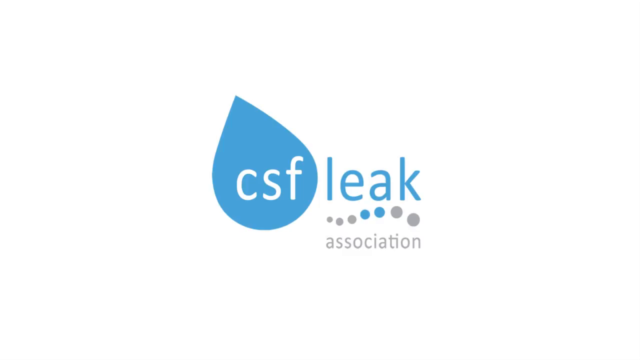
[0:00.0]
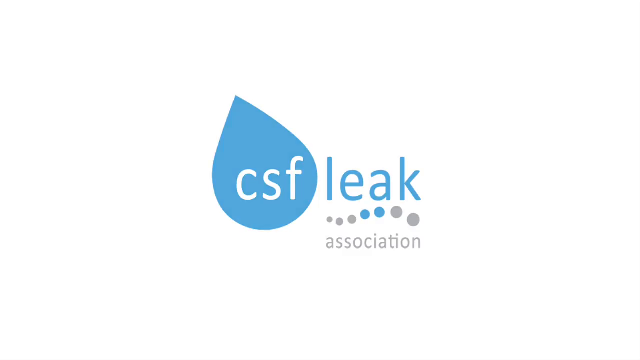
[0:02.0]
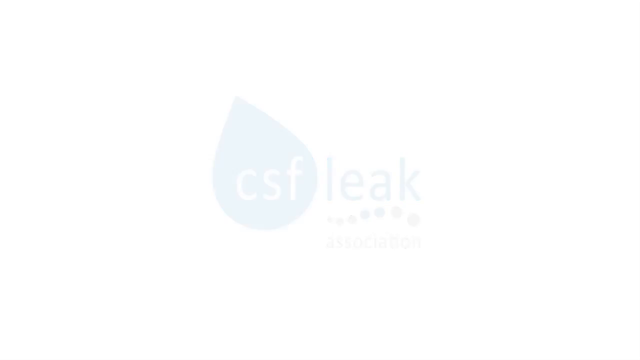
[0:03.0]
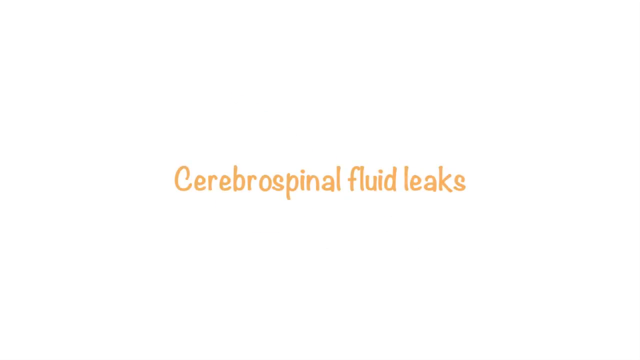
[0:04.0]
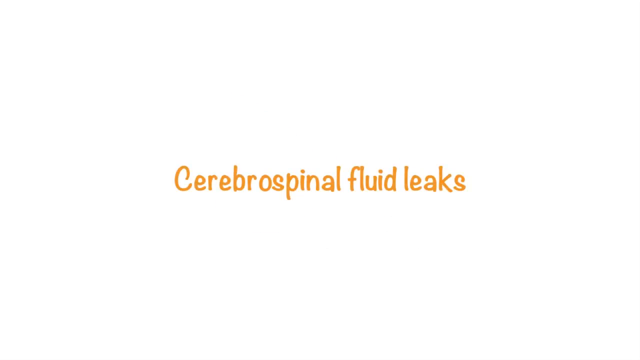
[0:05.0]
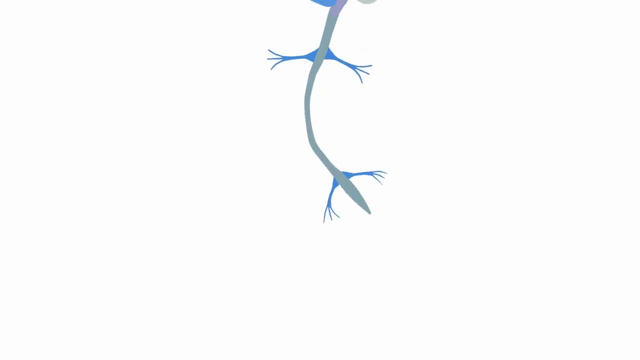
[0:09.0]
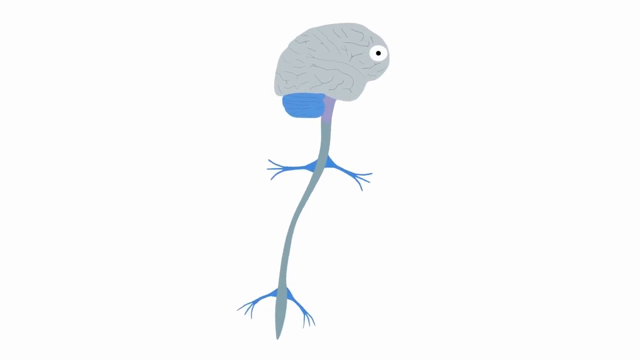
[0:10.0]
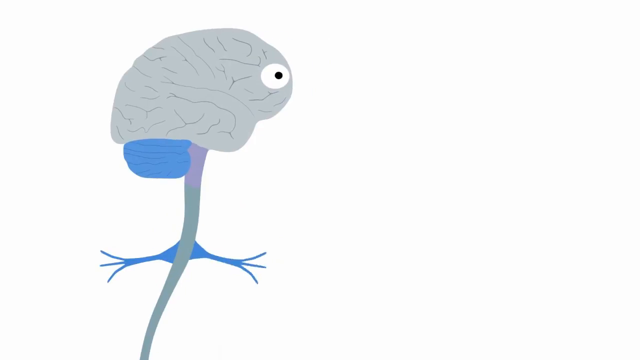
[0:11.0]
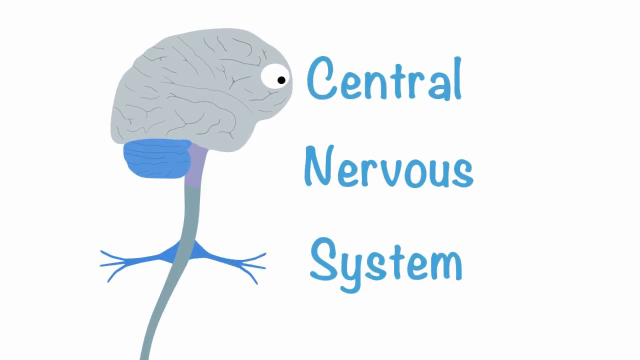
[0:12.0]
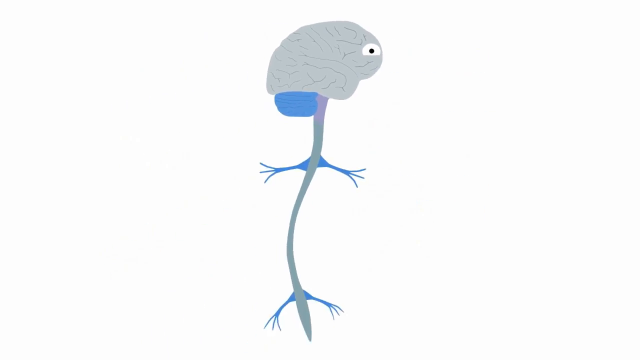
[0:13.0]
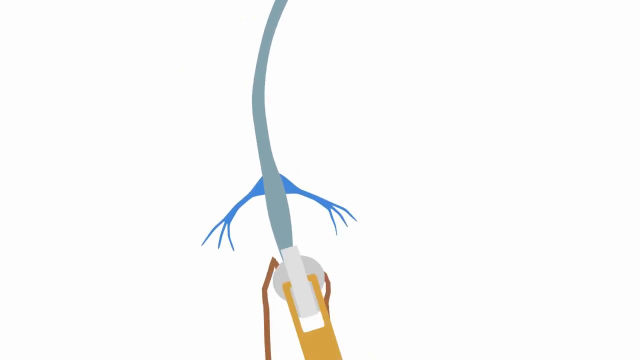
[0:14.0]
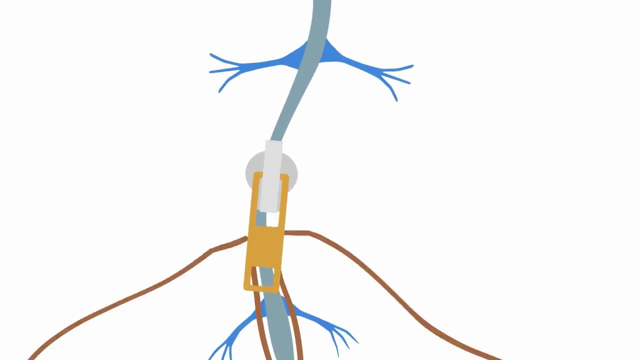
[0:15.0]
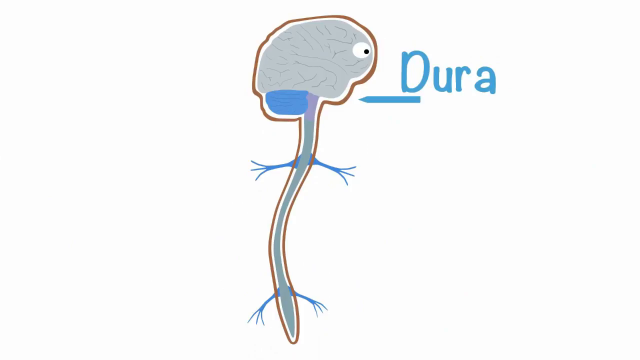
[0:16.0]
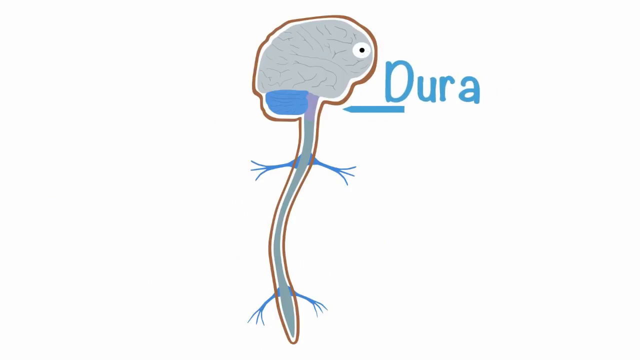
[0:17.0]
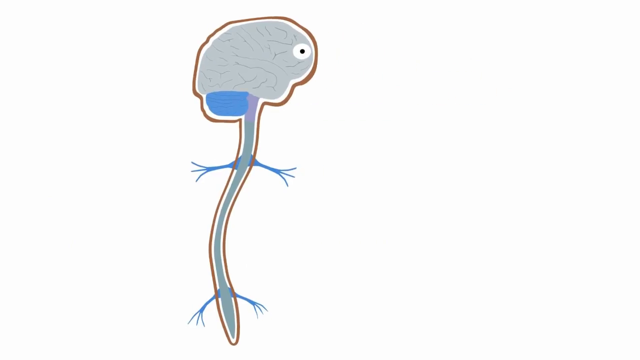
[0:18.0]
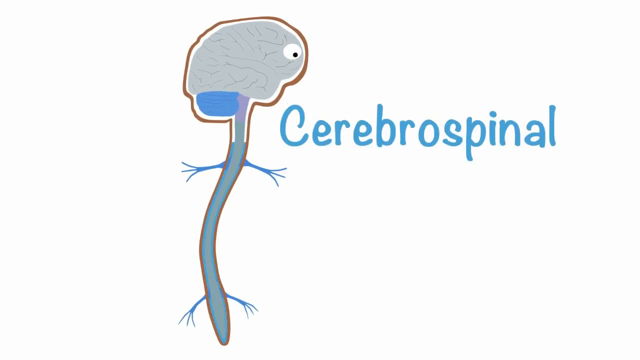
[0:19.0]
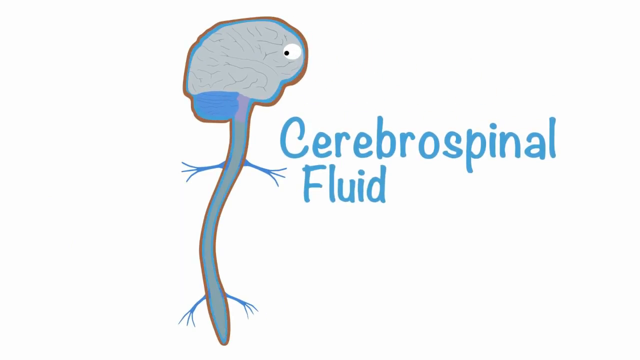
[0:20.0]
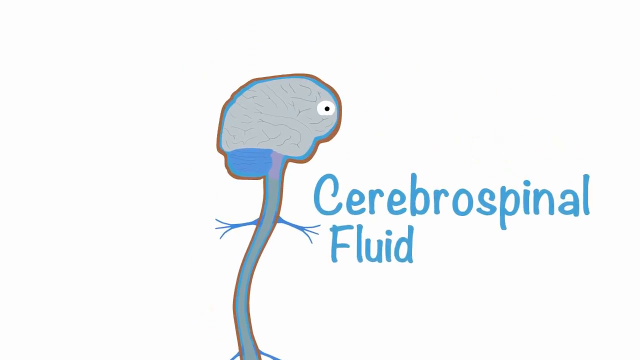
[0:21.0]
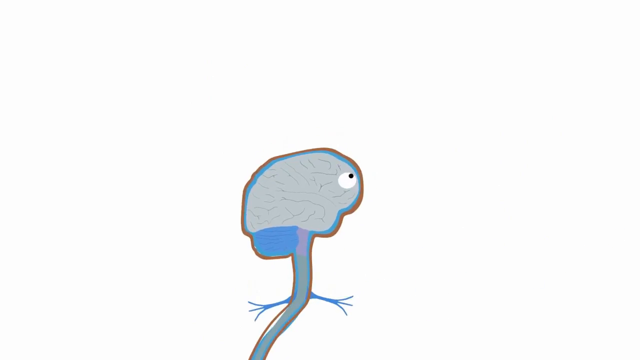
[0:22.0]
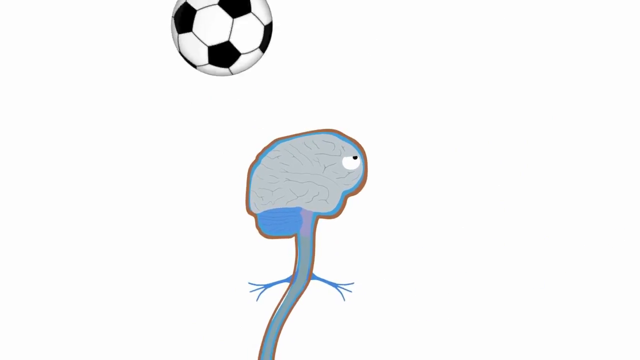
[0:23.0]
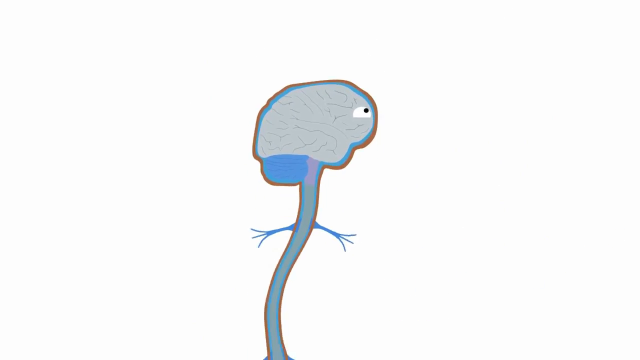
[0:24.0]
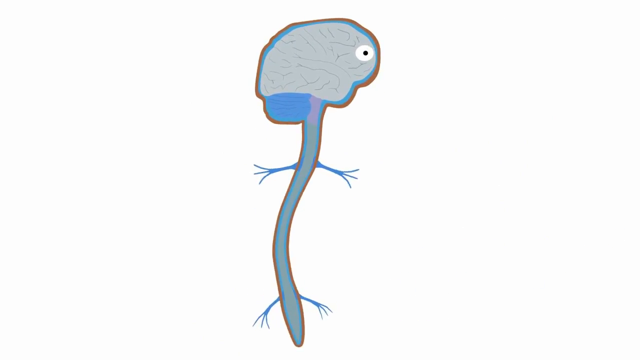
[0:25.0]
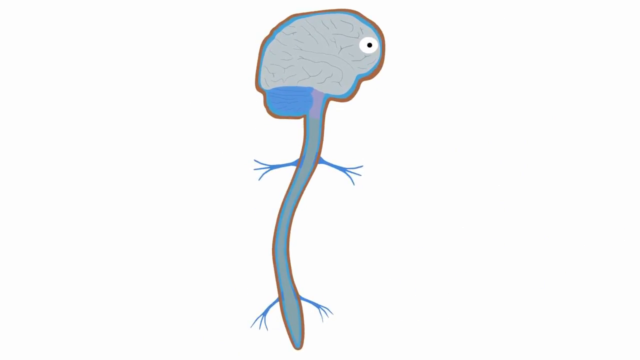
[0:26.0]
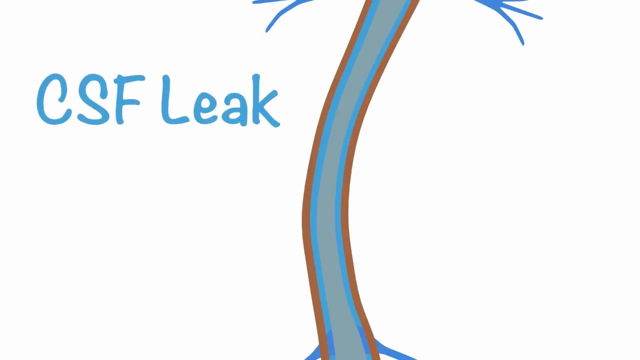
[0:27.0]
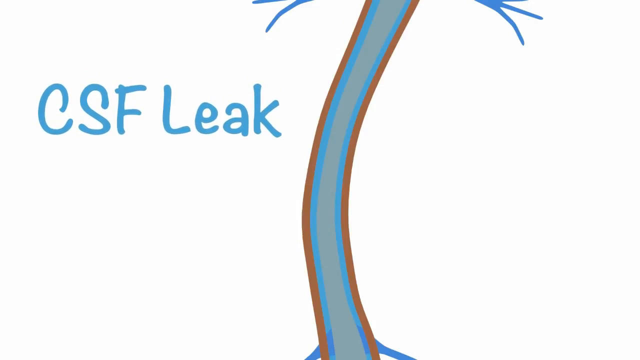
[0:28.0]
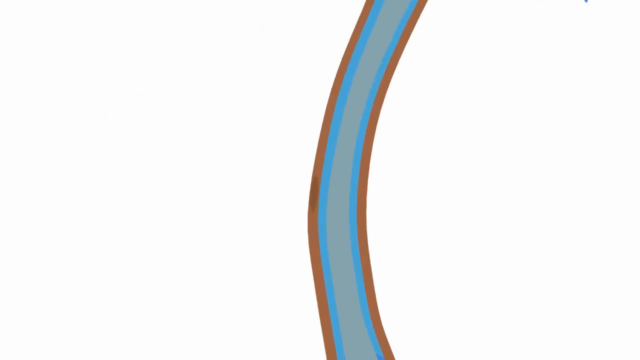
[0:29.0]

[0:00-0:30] On a white background, a graphic shows "CSF" in a blue teardrop-like shape, followed by "leak" with dots underneath it and "association" below that. The graphic fades away, leaving the screen white, and orange text reading "cerebral spinal fluid leaks" appears in the middle. The text disappears and the screen is white again. A graphic then floats down from the top of the screen and settles in the middle: a brain with a spinal cord attached, the bottom of the spinal cord kind of swinging back and forth. The graphic comes forward toward the viewer, enlarges and moves toward the left side of the screen. An eyeball is located on the brain, its pupil moving a bit, and the text "central nervous system" appears. The graphic moves back farther from the viewer, and something moves from the bottom of the spinal cord up toward the brain as the text "dura" appears. A blue substance travels from the bottom of the spinal cord up toward the top, coloring the spinal cord as it goes, and blue text reading "cerebral spinal fluid" appears to the right. A soccer ball moves and bounces off the brain in the graphic, and then a graphic reading "CSF leak" appears.